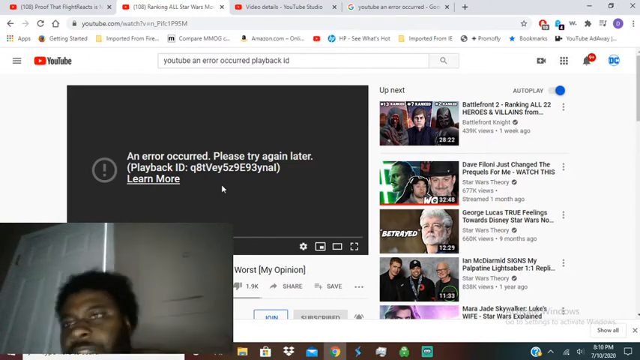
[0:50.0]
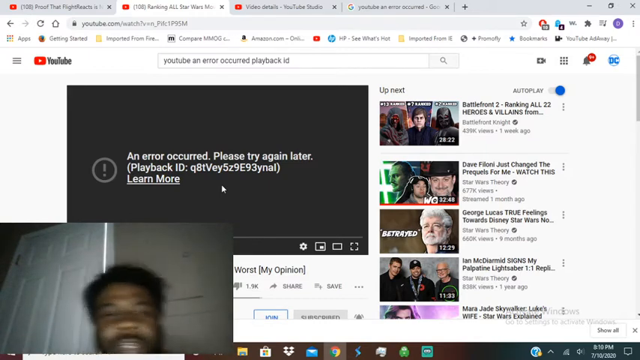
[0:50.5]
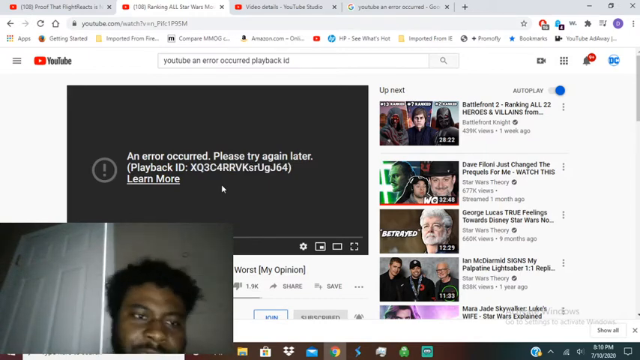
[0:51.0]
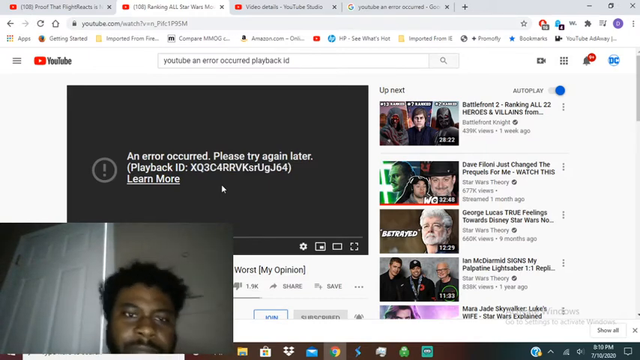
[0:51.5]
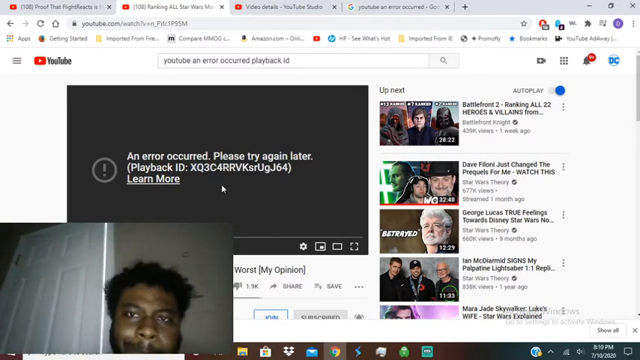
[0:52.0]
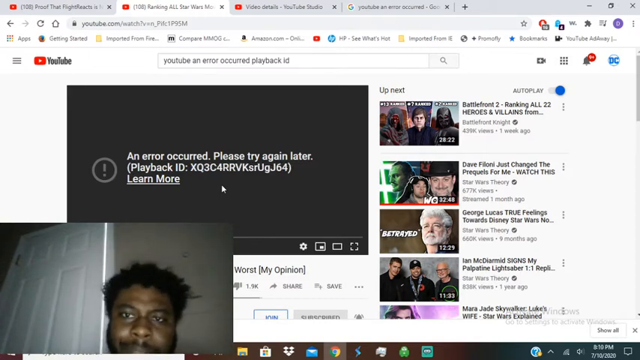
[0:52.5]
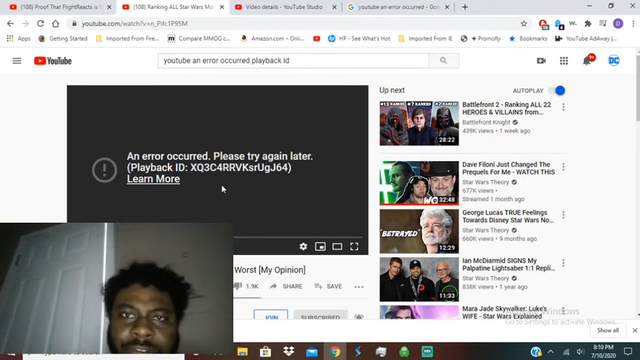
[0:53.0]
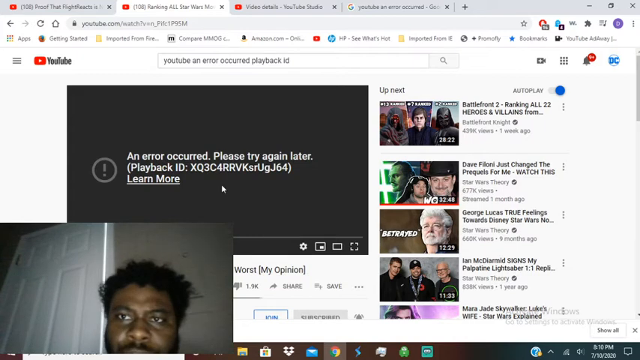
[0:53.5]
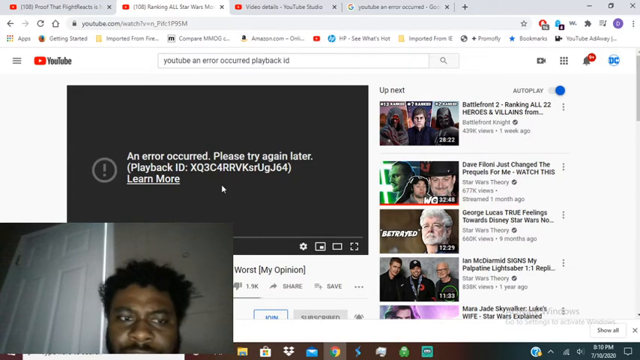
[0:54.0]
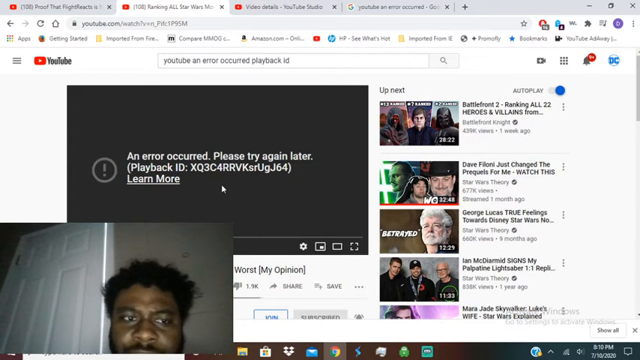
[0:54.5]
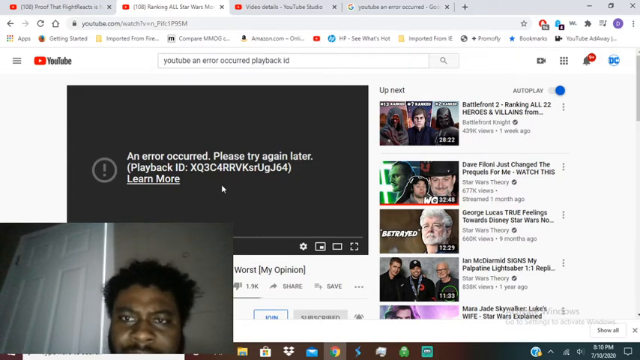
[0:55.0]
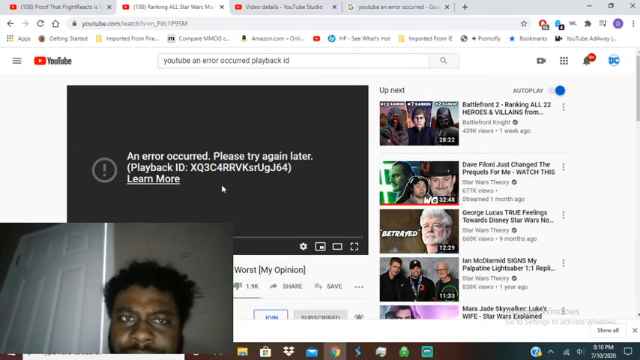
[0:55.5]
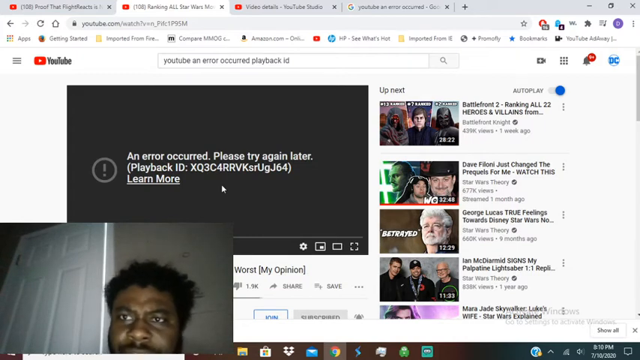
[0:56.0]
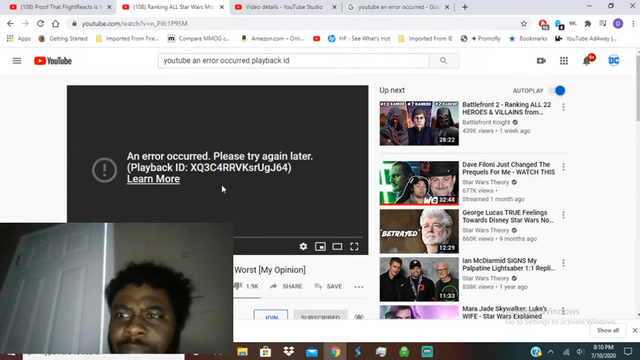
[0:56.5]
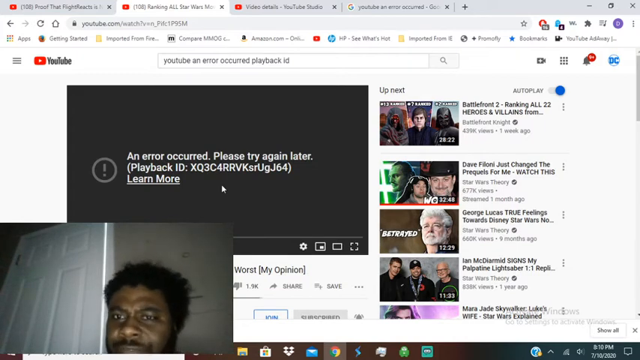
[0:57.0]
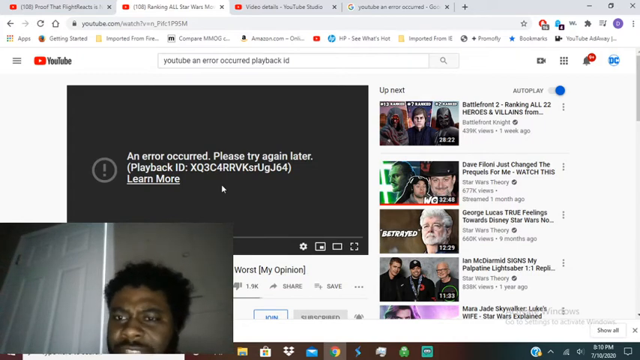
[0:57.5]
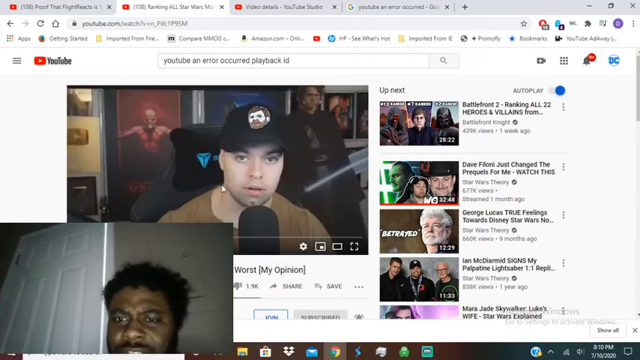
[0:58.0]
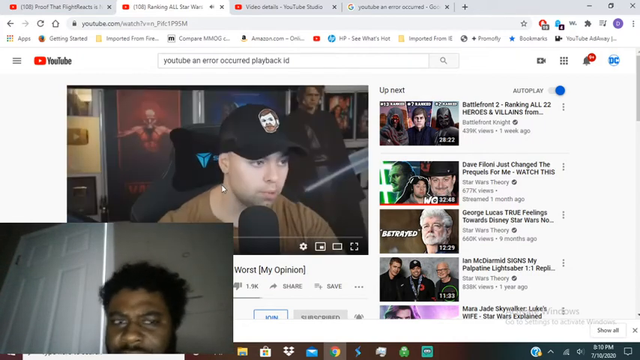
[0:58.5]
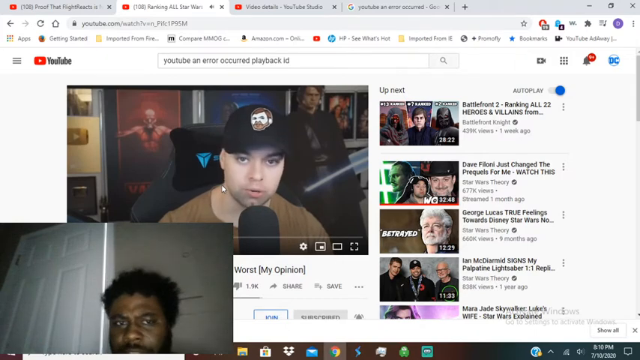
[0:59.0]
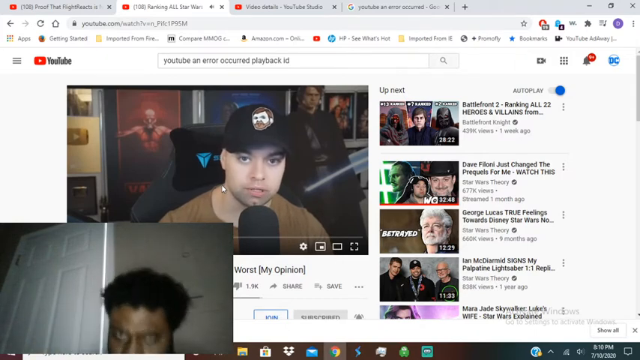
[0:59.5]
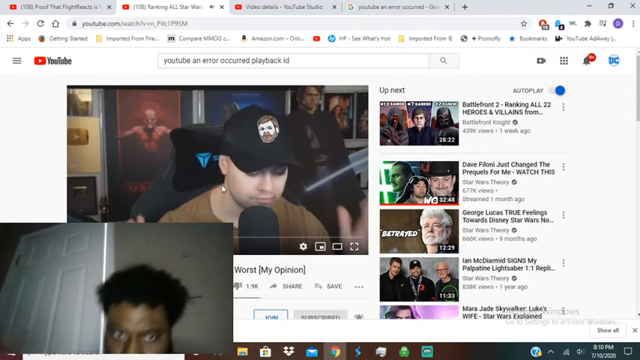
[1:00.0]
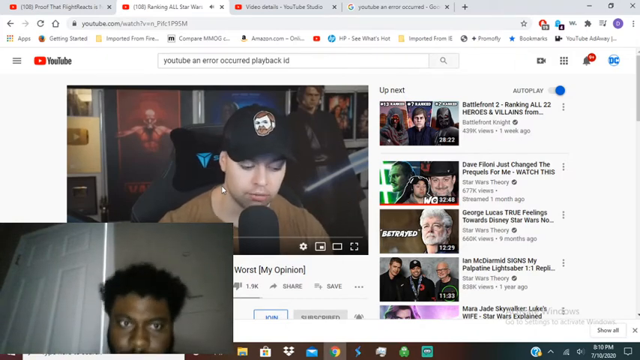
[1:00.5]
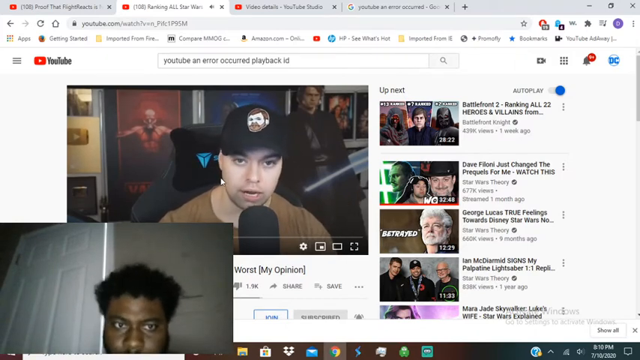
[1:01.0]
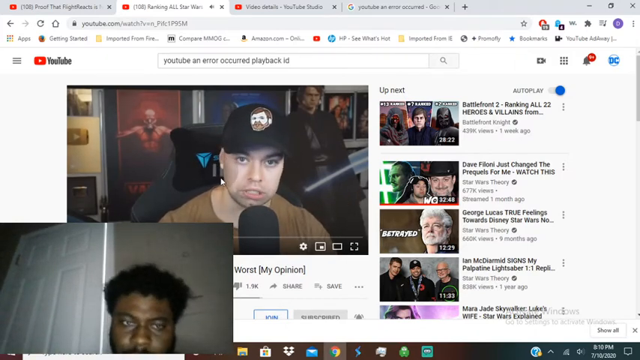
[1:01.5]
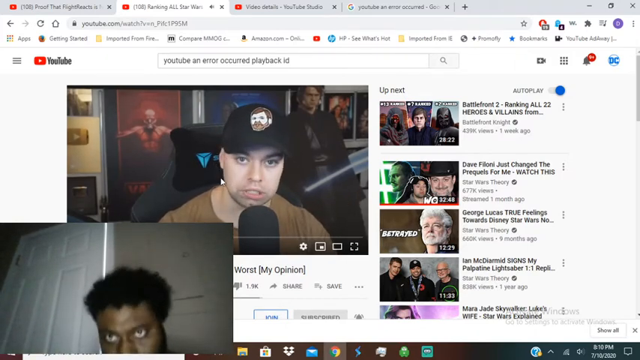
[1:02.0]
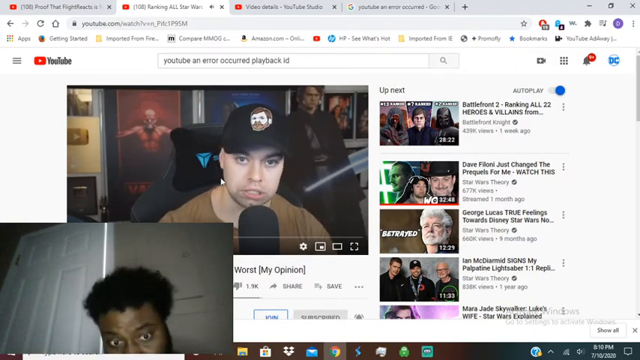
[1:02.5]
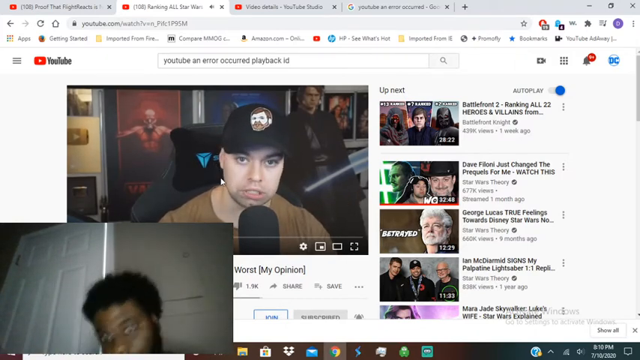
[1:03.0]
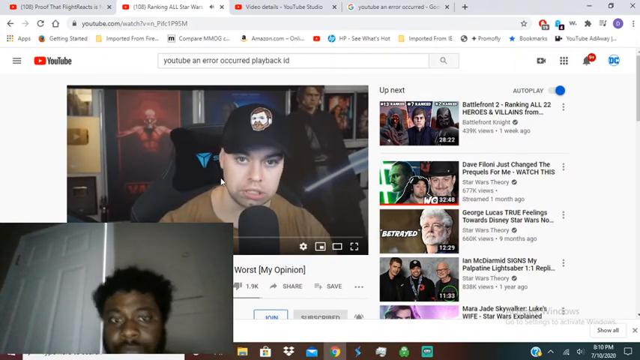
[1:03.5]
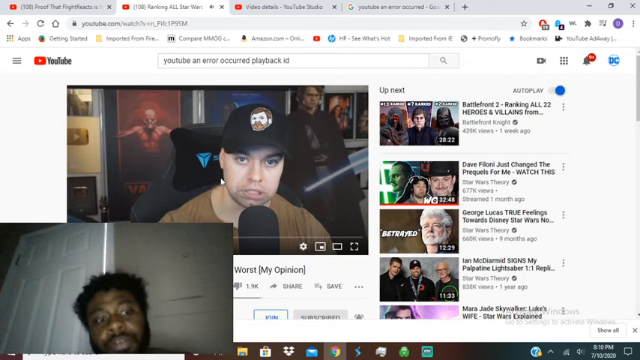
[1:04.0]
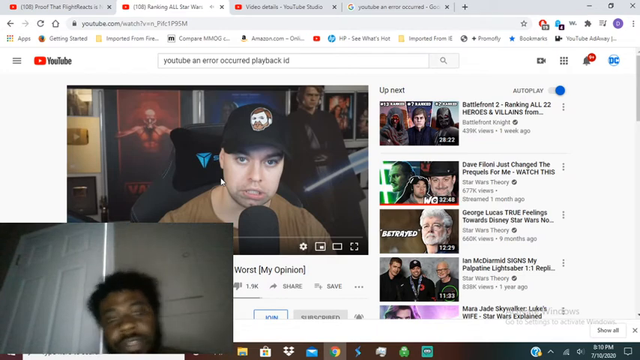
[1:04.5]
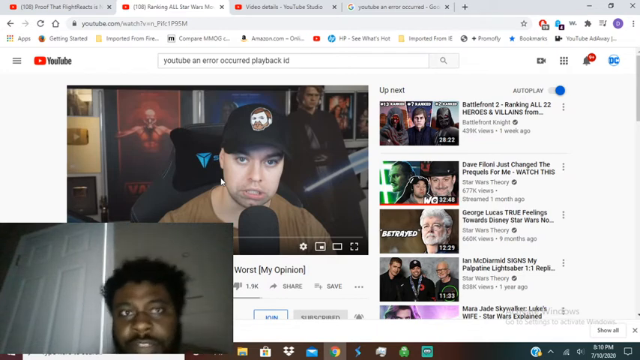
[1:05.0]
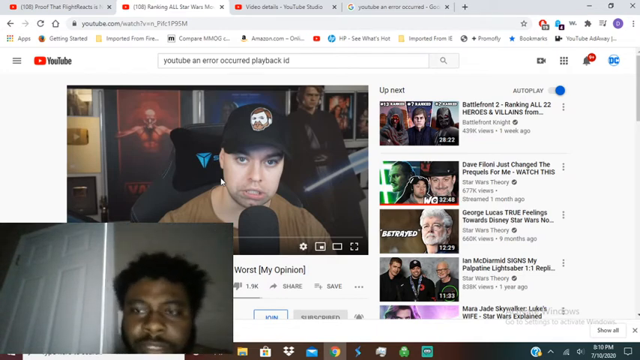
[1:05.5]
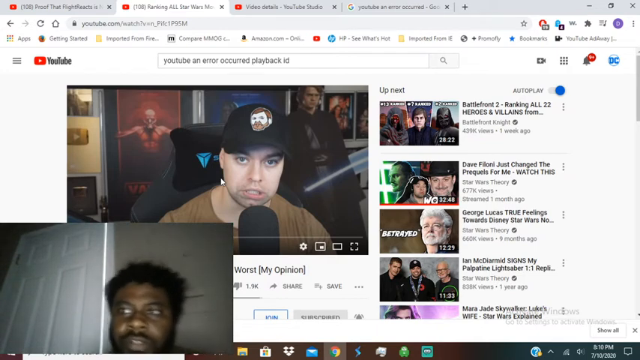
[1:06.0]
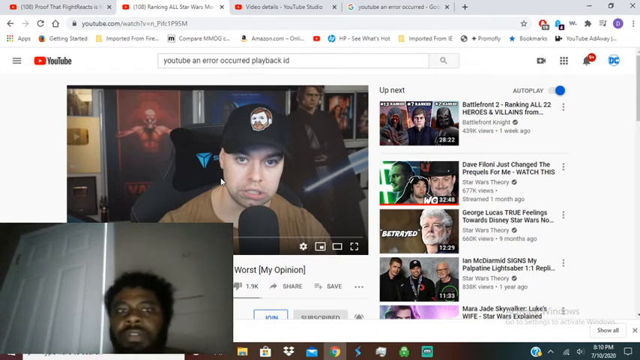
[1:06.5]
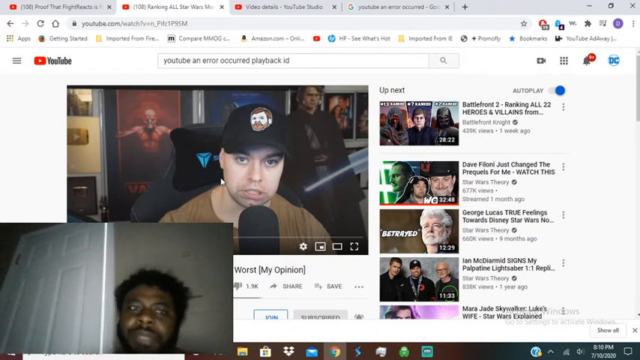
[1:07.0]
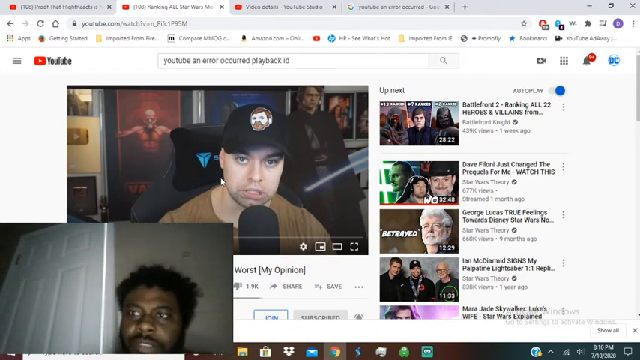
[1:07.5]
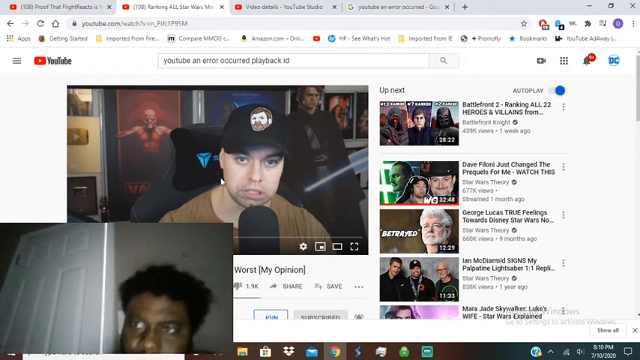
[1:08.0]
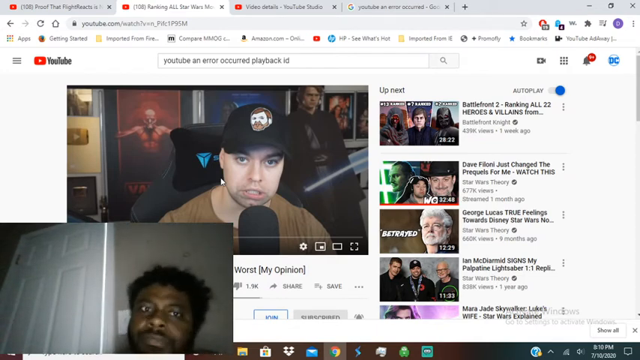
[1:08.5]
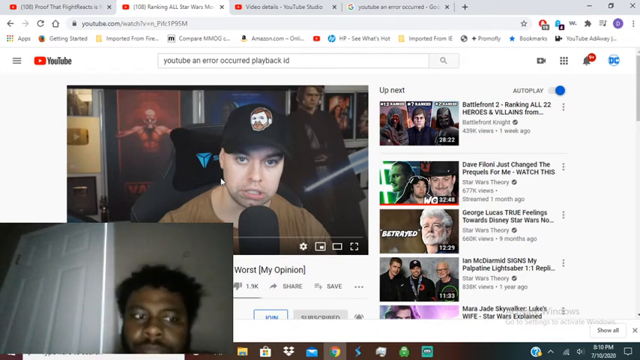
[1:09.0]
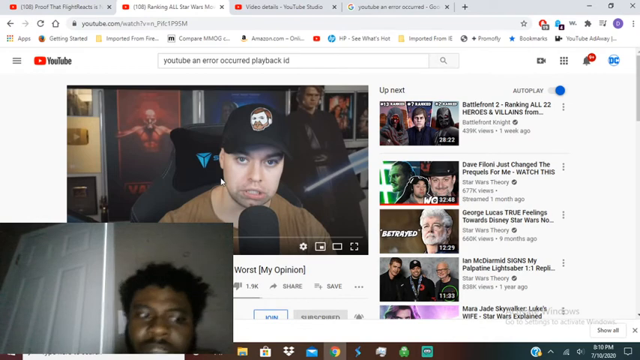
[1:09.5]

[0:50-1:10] Three of the open tabs are YouTube pages and one is a Google search page. In the bottom left corner is a live video of a man who appears to be searching what is on screen. The page he is on reads "an error occurred. Please try again later. Playback ID" followed by "learn more," with an exclamation point within a circle. The man is talking while facing his screen and looks frustrated. He then opens a video of another man sitting in a game chair at a microphone, wearing a ball cap and also talking. The man pauses that video and continues to talk, bobbing his head back and forth toward his computer monitor in a way that suggests he is fairly frustrated.